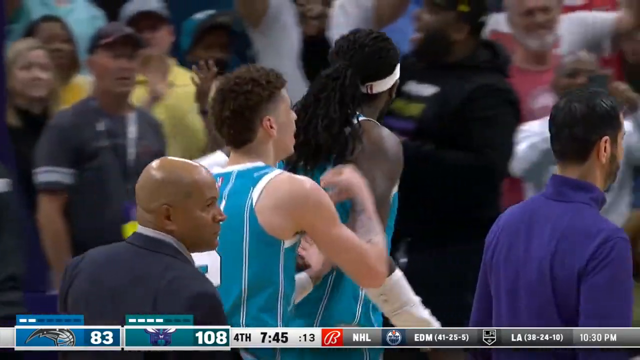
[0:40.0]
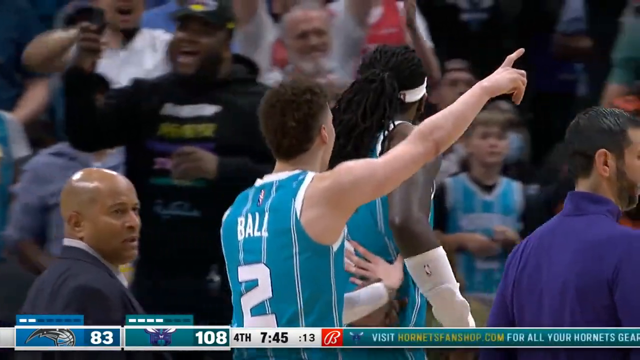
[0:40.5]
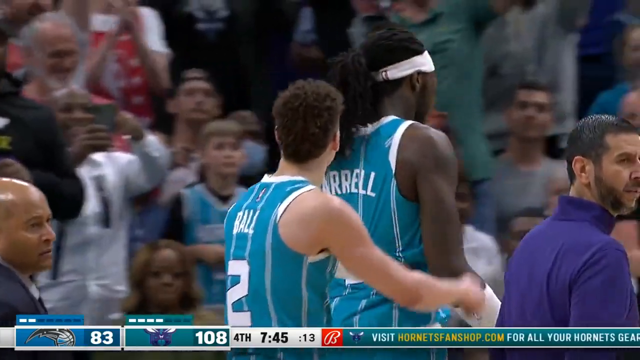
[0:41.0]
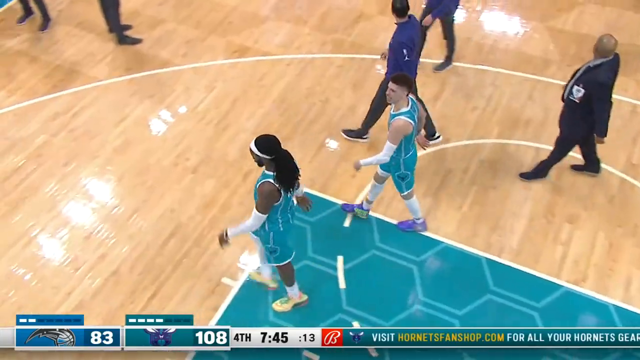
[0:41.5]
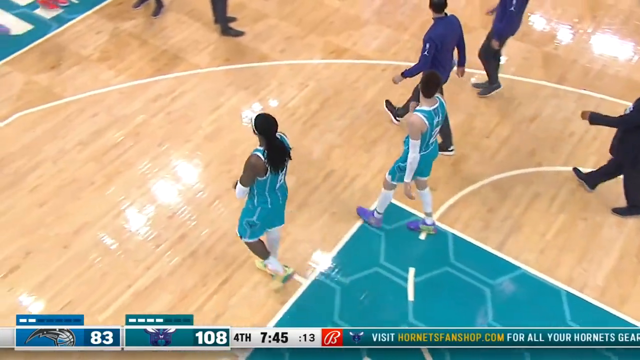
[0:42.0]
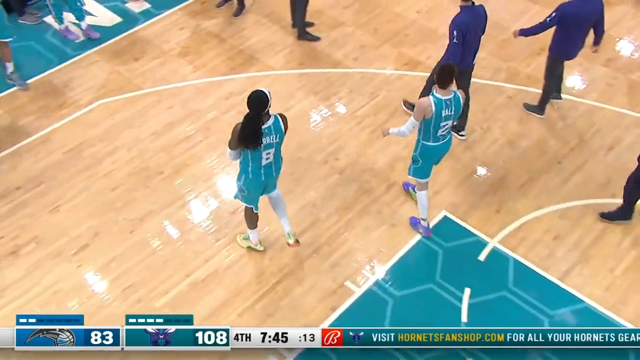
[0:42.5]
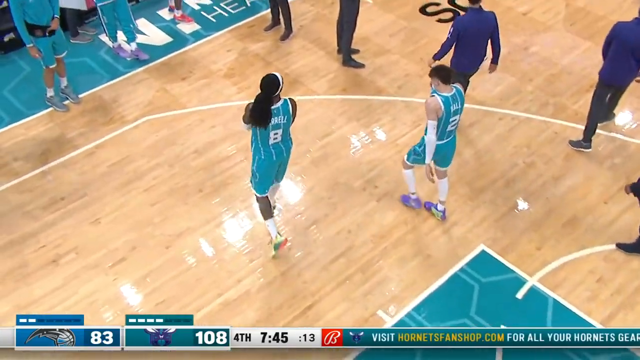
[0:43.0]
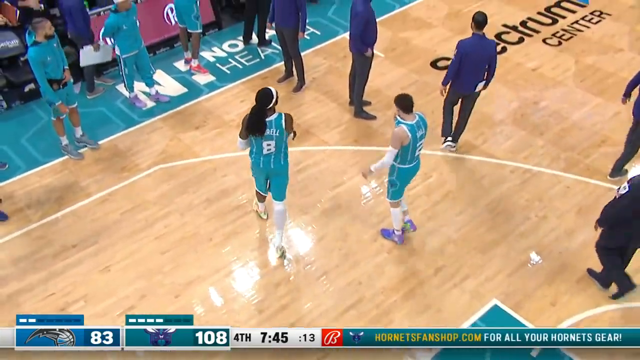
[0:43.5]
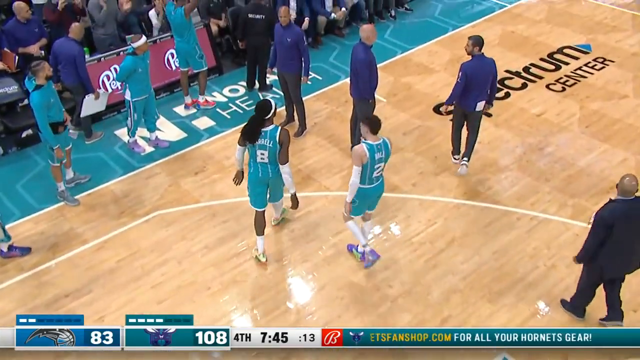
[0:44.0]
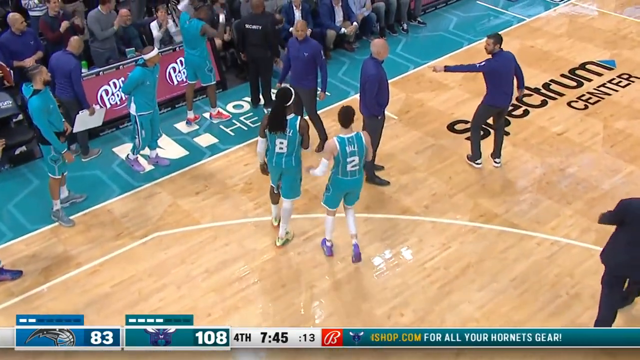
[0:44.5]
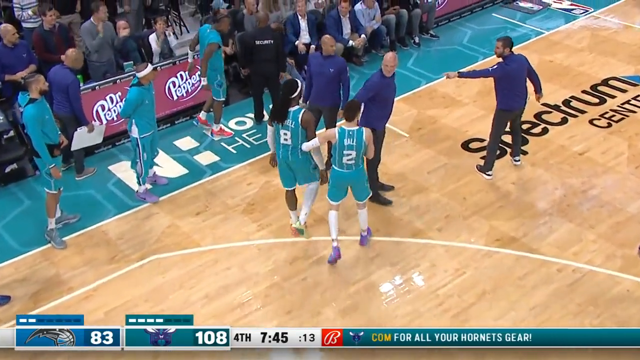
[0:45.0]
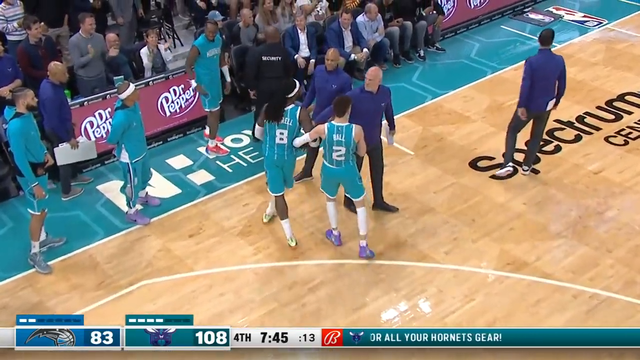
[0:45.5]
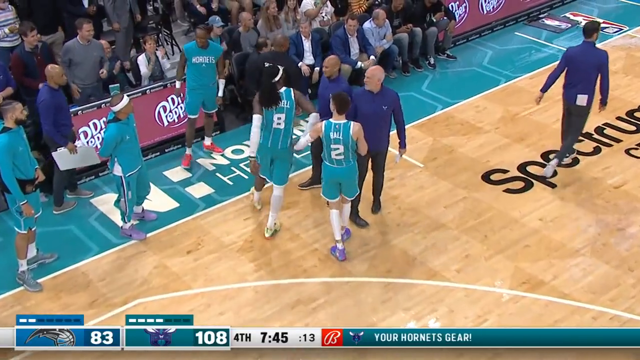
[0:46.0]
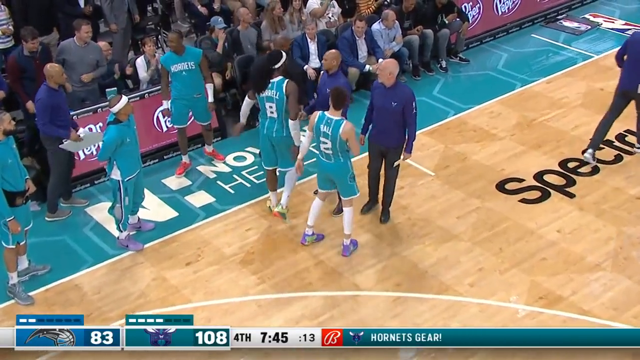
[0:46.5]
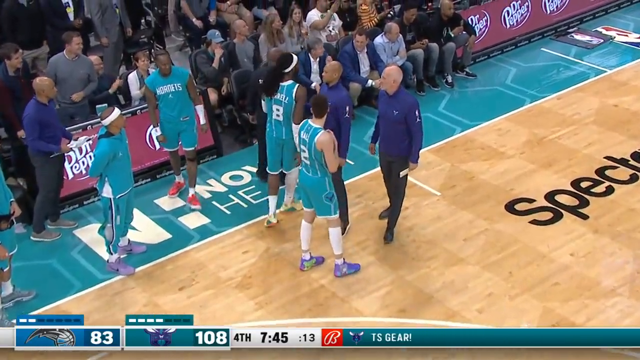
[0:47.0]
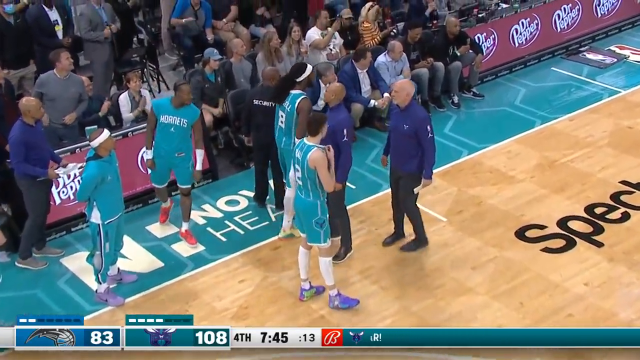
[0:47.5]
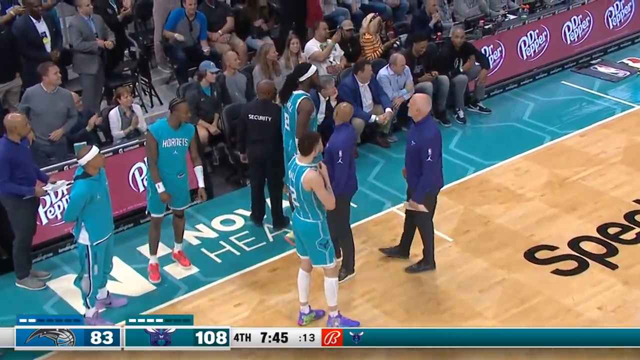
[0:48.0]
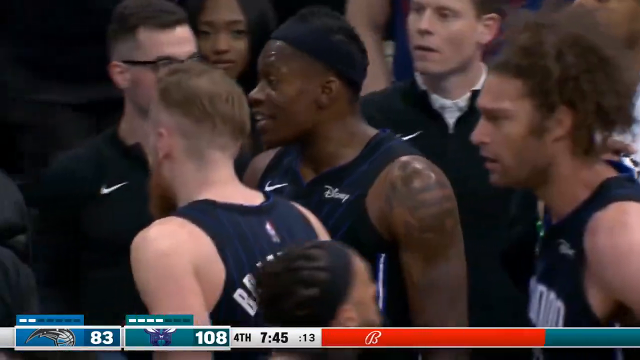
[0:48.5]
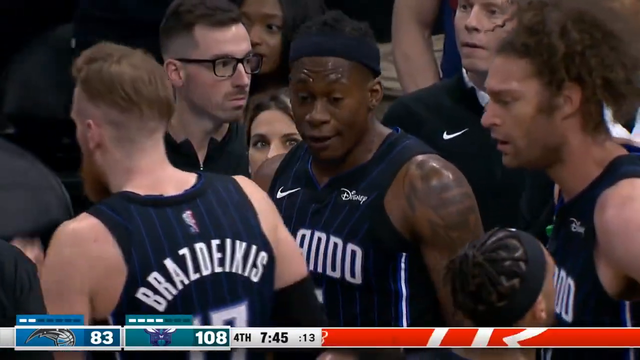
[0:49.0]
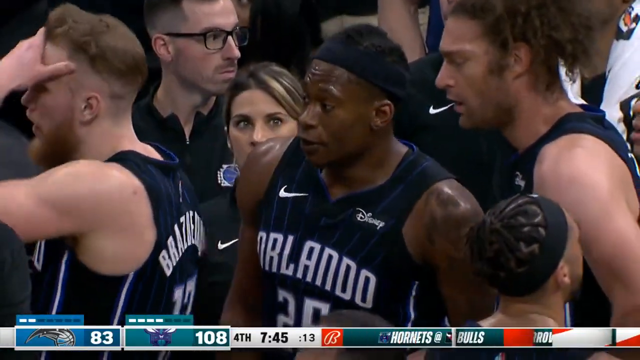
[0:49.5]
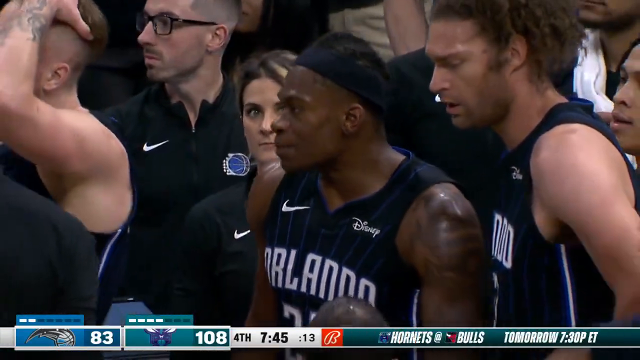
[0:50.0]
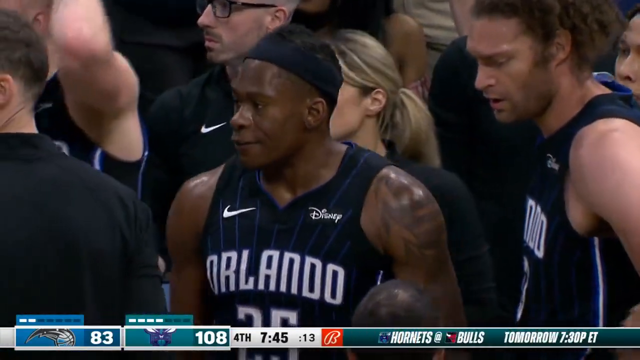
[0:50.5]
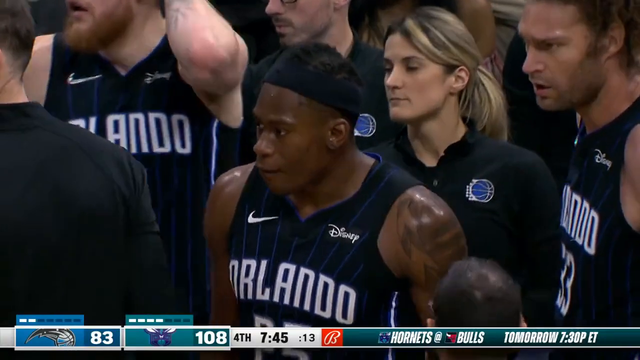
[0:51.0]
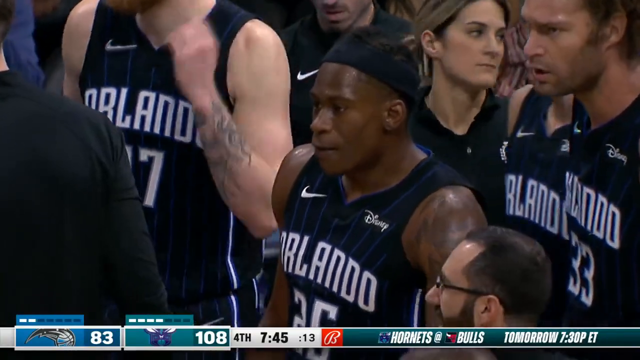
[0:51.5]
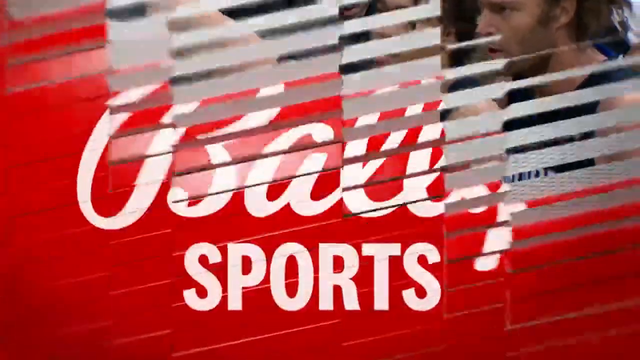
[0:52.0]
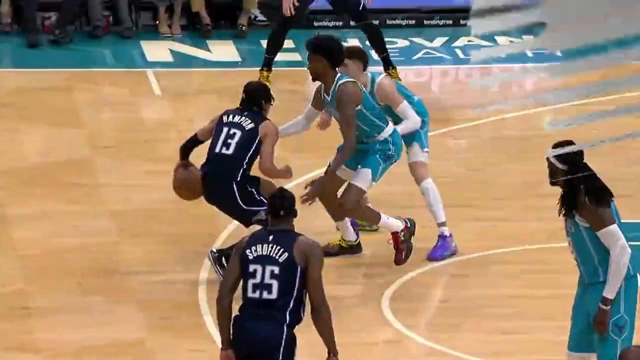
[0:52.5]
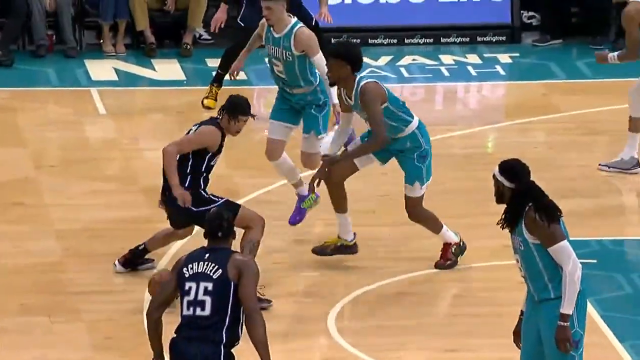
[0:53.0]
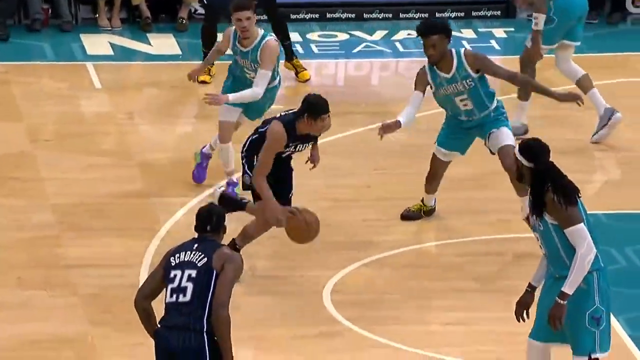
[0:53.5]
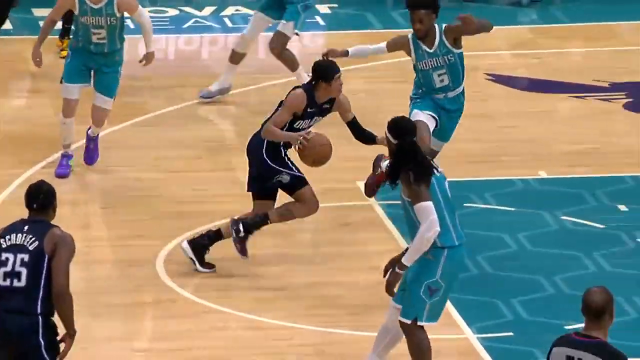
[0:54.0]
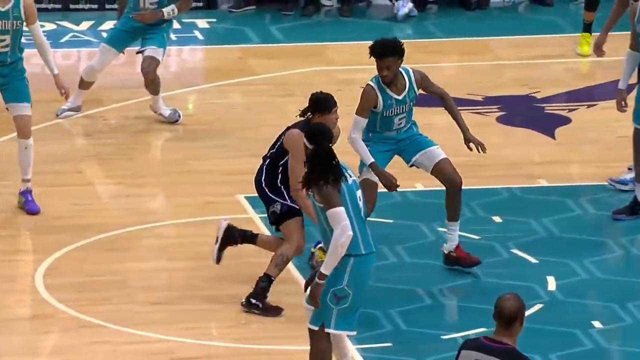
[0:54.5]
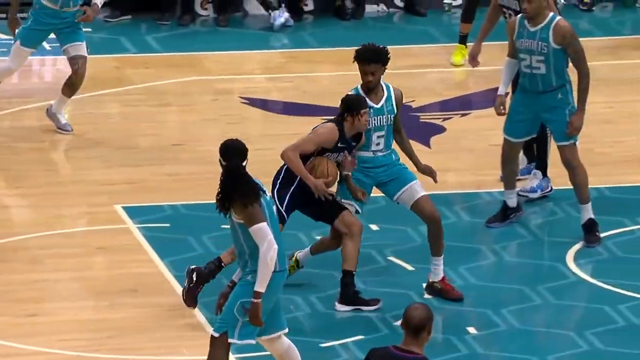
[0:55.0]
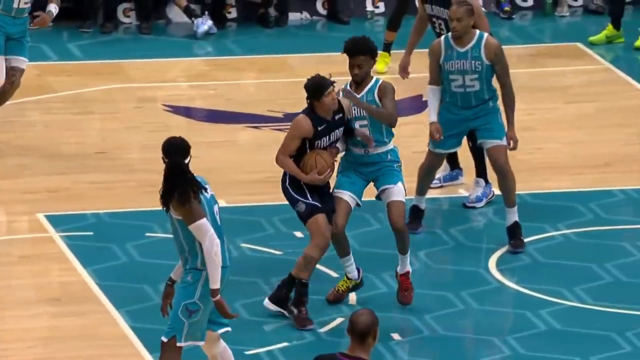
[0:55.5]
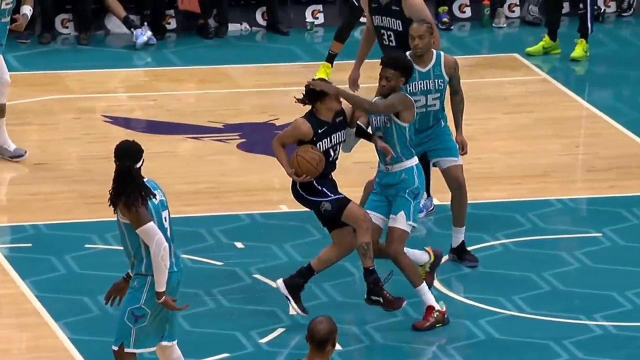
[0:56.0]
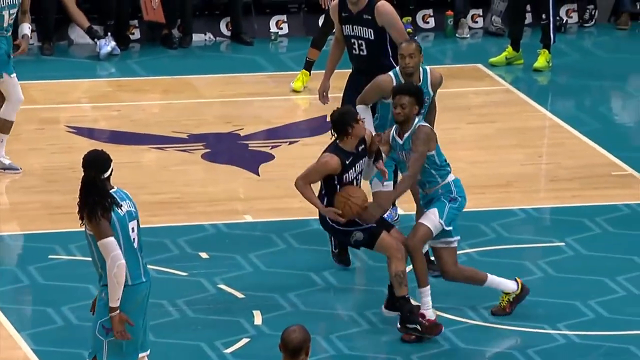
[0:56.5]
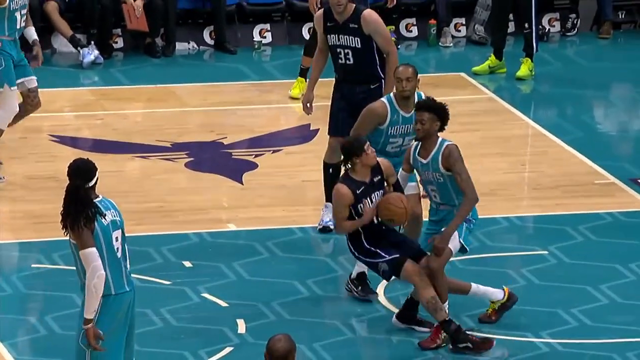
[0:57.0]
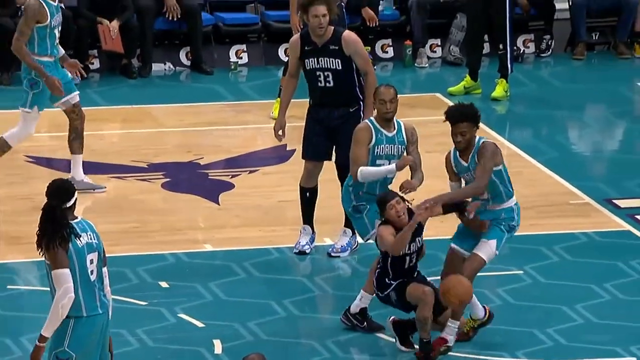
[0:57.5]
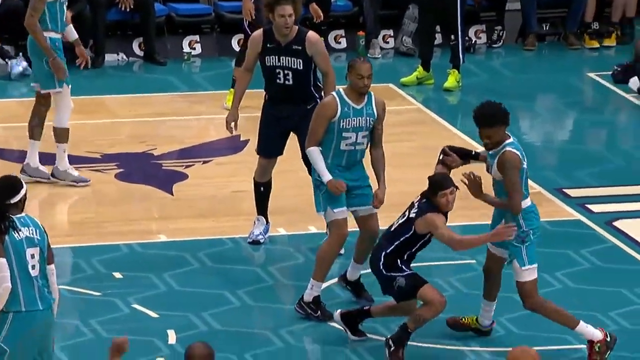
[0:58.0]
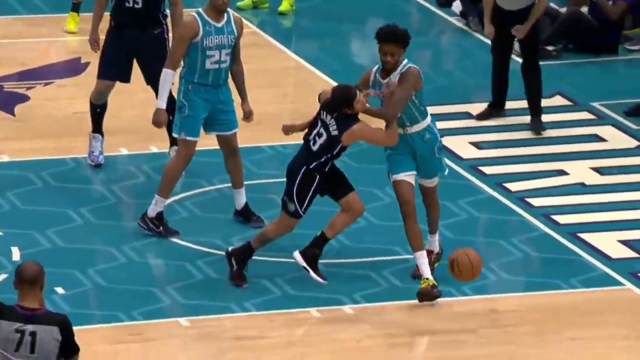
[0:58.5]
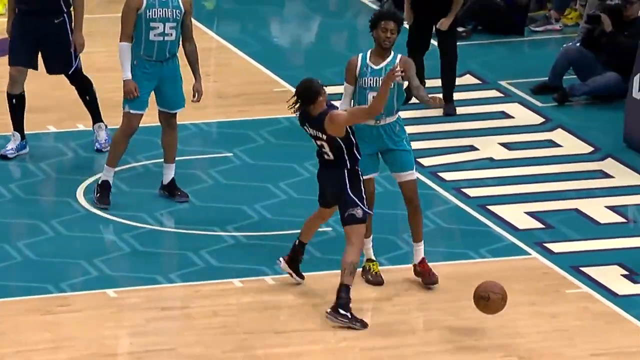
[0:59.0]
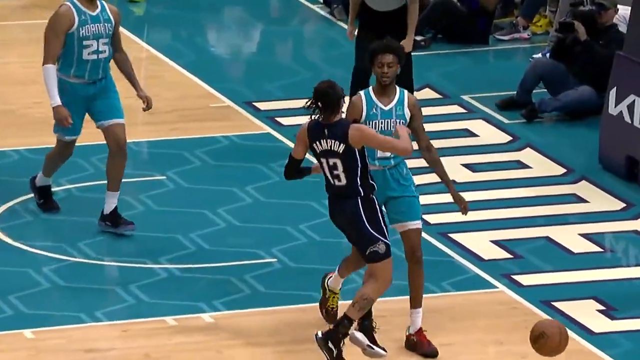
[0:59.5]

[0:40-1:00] Players on the Hornets, in teal blue uniforms, walk away, and one raises a hand up in the air, sort of like a fist in the air, as if happy to have won or something. A replay shows the Hornets players walking away with hands in the air. The black team, Orlando, is then shown sort of talking to their coach; it almost looks like they are mouthing off, and they do not look very happy. Another replay shows the Orlando player charging to the basket and the Hornets player stopping him, and the two sort of bump into one another.